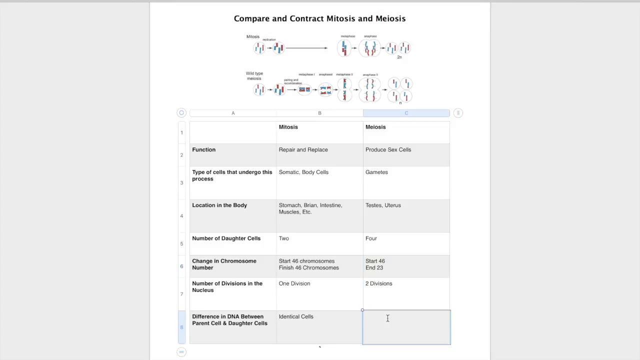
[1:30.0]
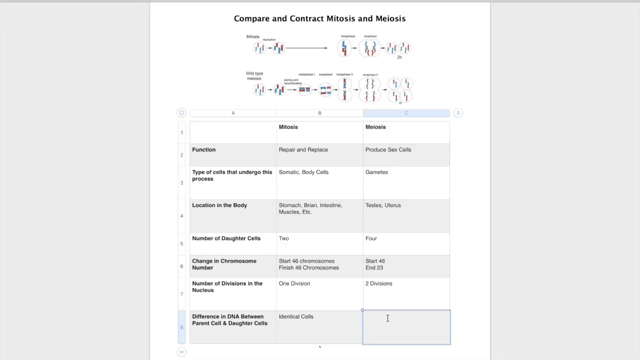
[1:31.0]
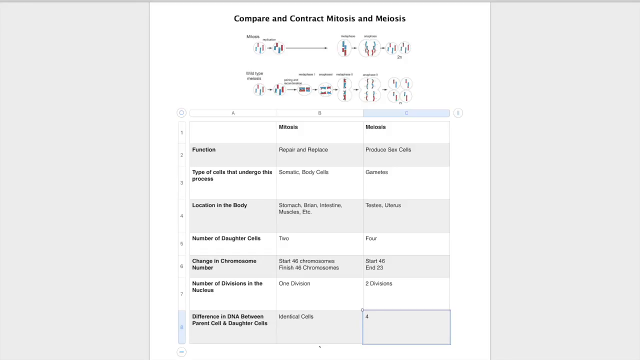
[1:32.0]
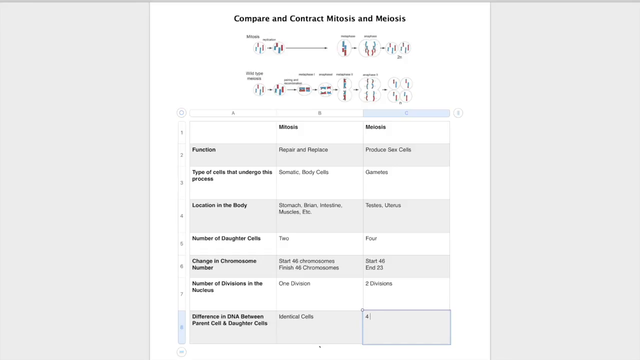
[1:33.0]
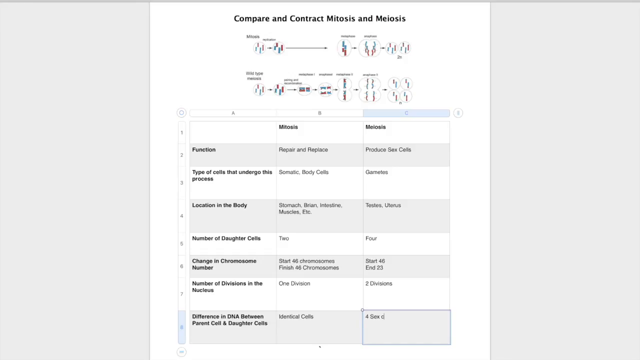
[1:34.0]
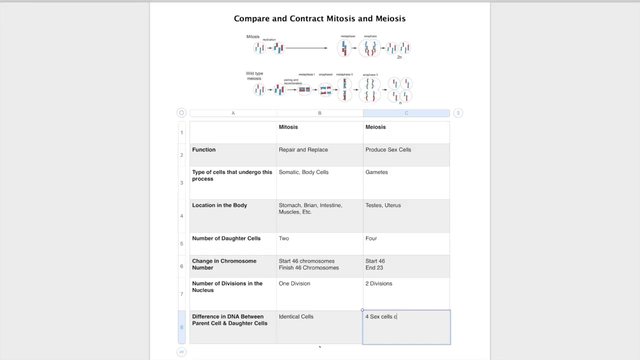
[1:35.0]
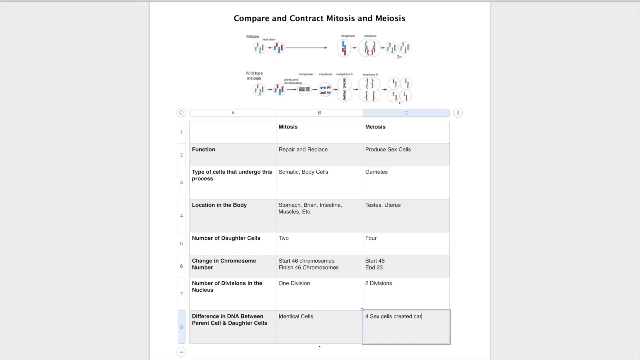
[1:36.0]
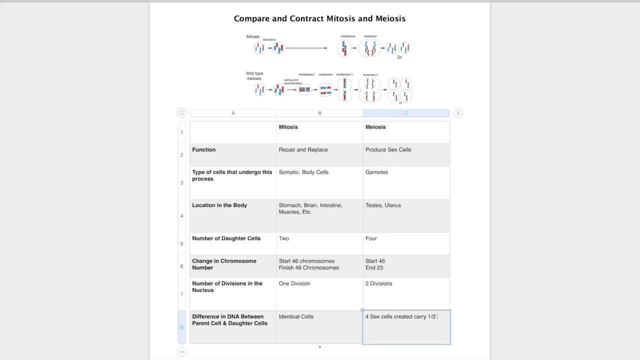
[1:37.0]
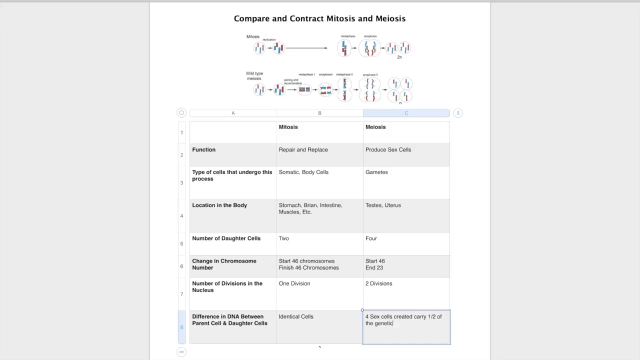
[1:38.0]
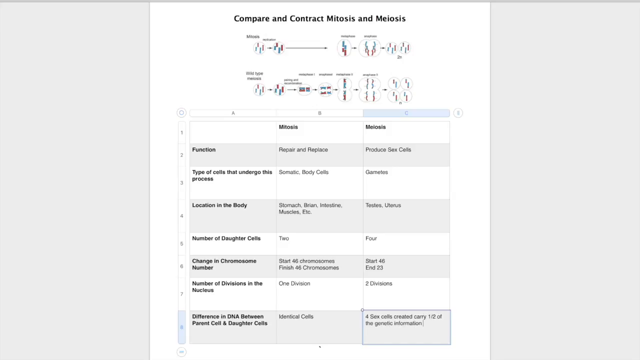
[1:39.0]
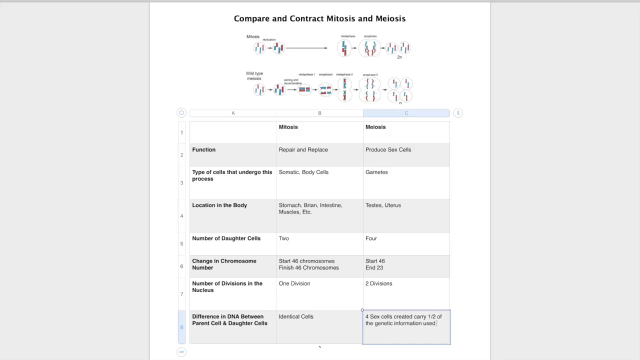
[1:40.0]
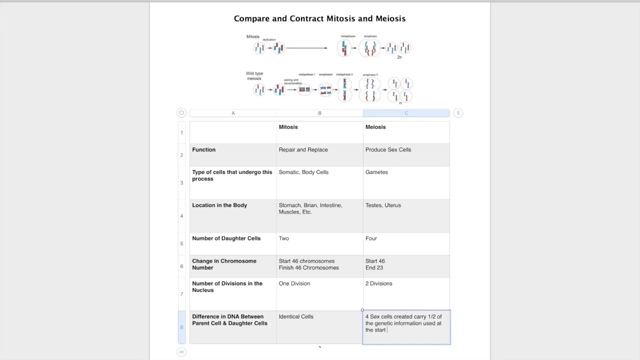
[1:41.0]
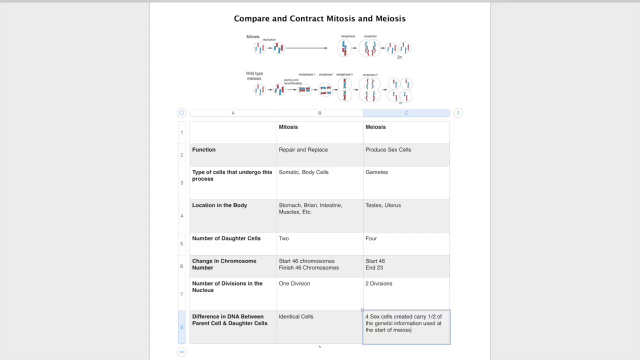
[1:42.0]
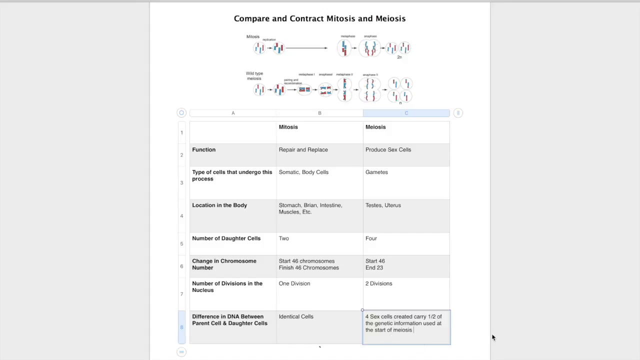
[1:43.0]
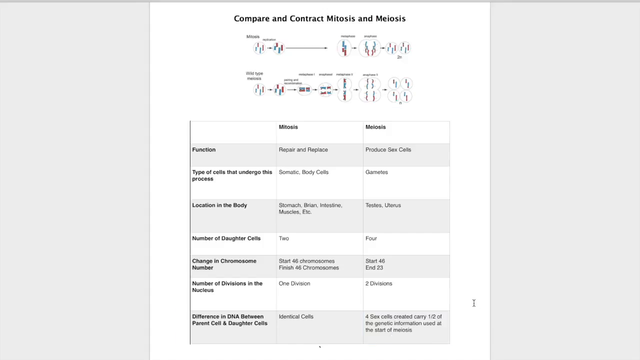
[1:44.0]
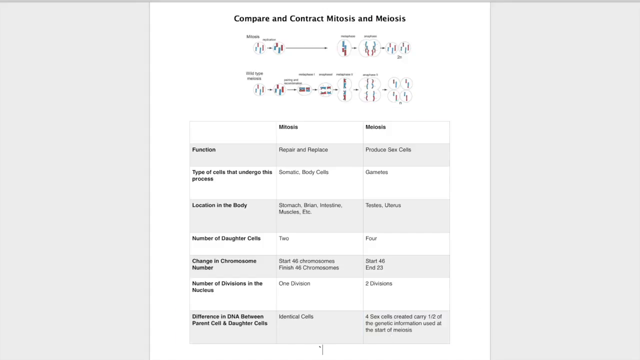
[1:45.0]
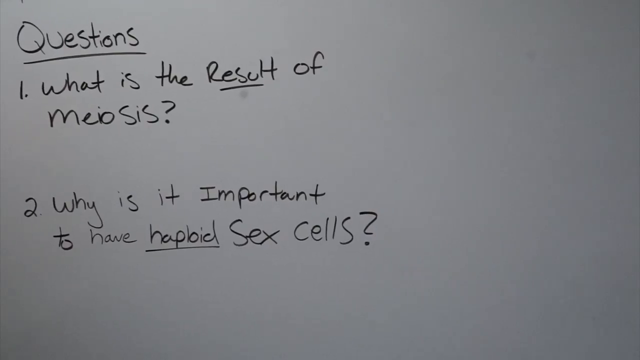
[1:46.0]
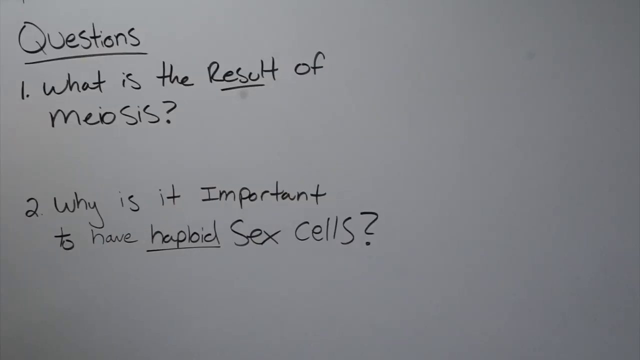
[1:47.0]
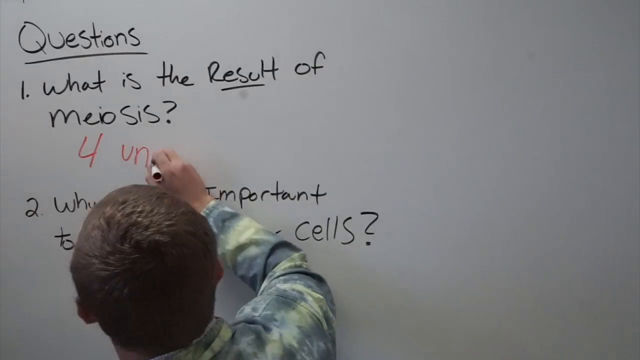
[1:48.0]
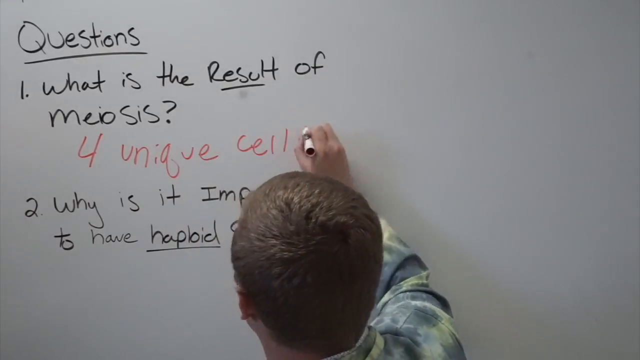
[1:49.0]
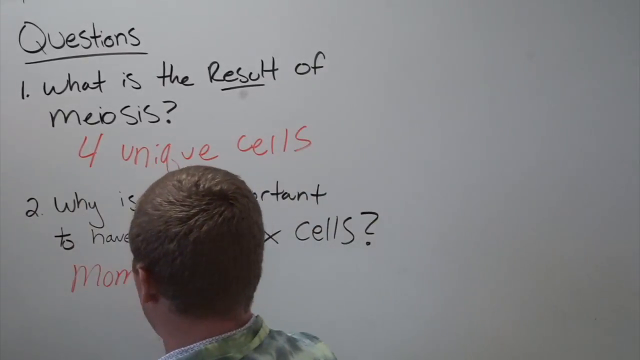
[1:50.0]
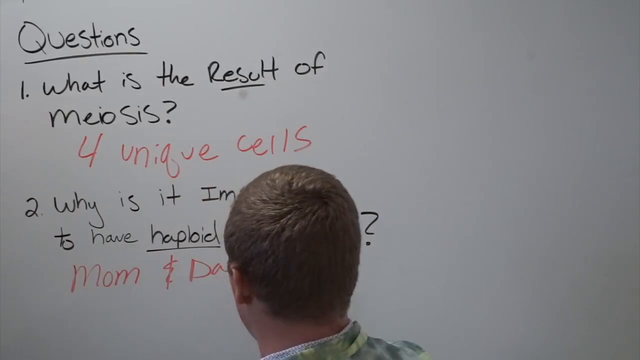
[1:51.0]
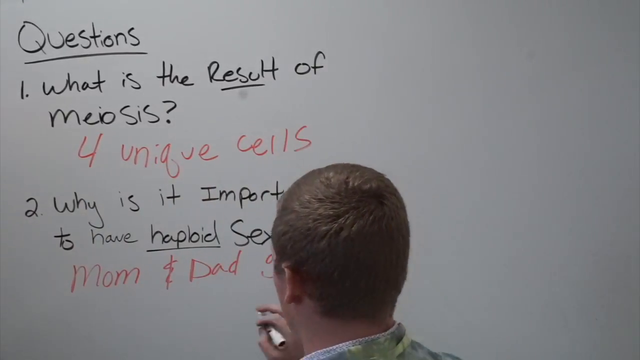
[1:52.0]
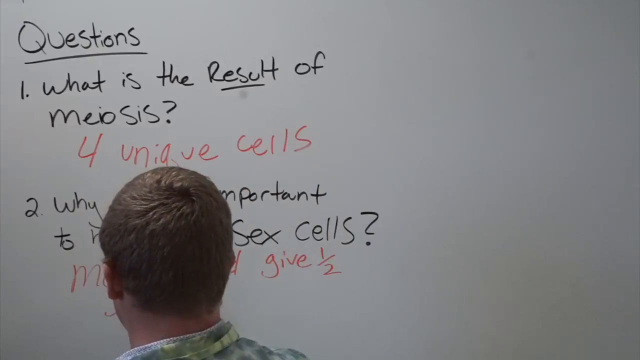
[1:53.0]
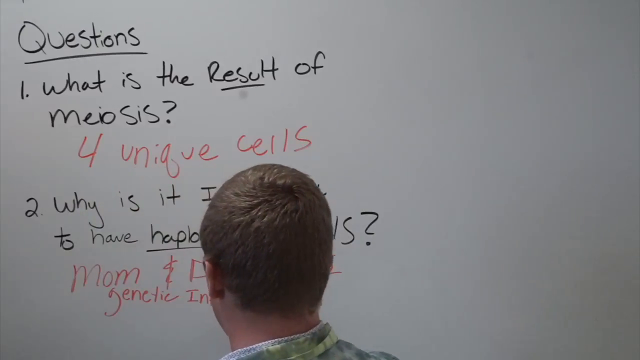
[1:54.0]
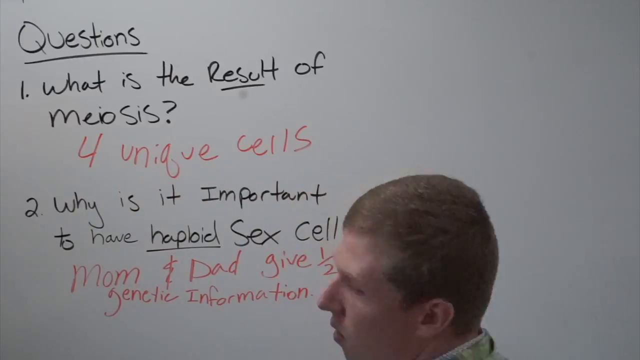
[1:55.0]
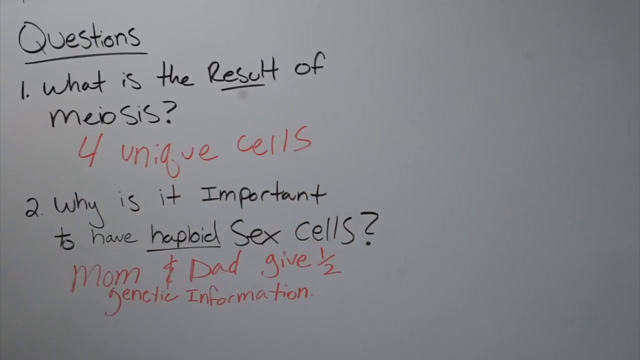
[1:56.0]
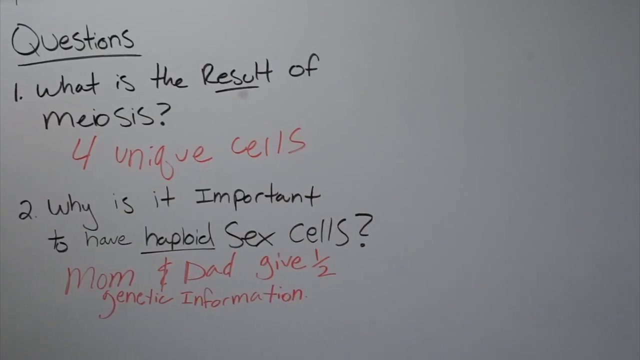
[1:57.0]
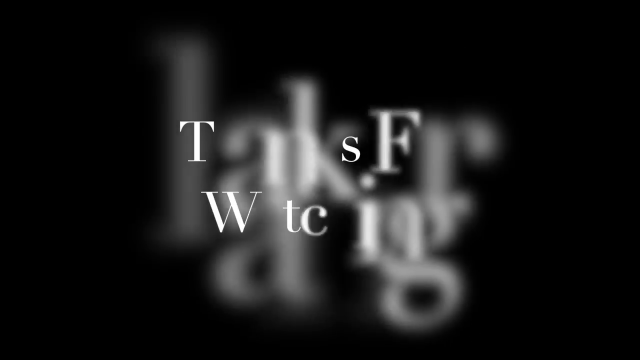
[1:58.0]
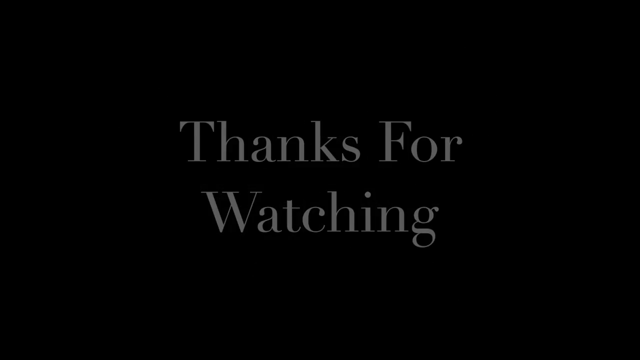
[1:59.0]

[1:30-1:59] A chart that looks kind of like a hand-written paper reads "compare and contrast mitosis and meiosis", with squiggles of DNA and something like X and Y parts for women and men. At the top of the chart are columns A, B and C; column B has "mitosis" running down vertically, and next to it column C is "meiosis". Down the side, the numbered rows read: two "function", three "types of cells that undergo this process", four "location in the body", five "number of daughter cells", six "change in chromosome number", seven "number of divisions in nucleus", and eight "difference in DNA between" cells. The answers are filled in, and text is typed at the bottom: "Sex cells created carry one half of the genetic information used at the start of meiosis." The video then moves to a page where a professor has written questions on the board: "what is the result of meiosis?" with the answer "four unique cells", and "why is it important to have haploid sex cells?" with the answer "mom and dad give half genetic information". It quickly moves to a last page where letters pop up randomly to spell "thanks for watching", and then that page disappears.